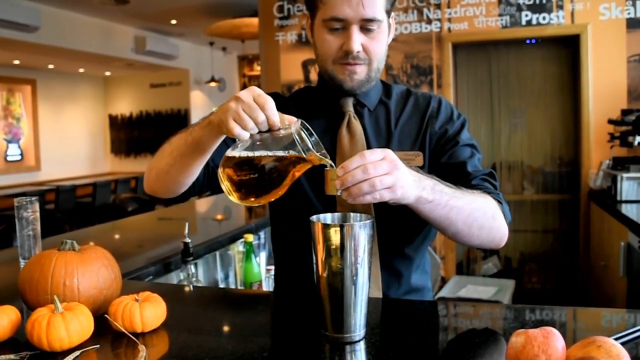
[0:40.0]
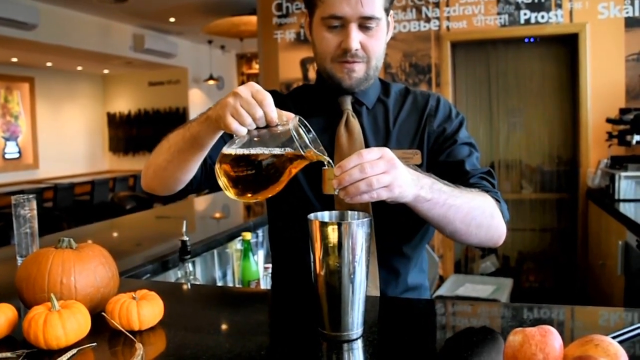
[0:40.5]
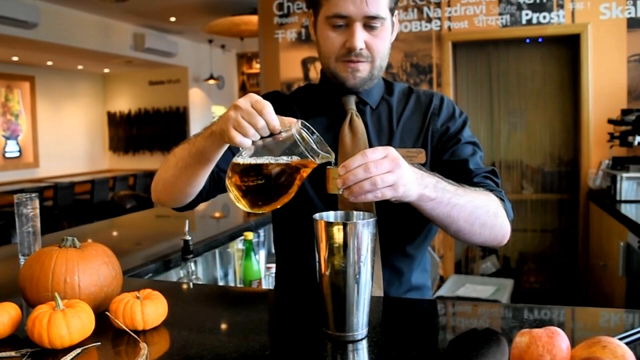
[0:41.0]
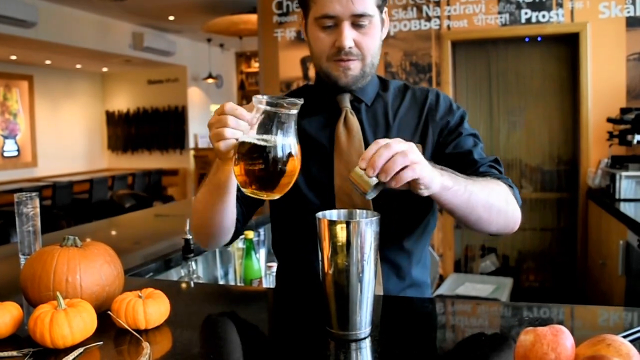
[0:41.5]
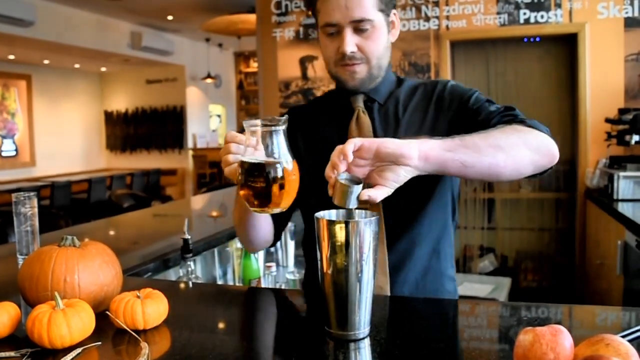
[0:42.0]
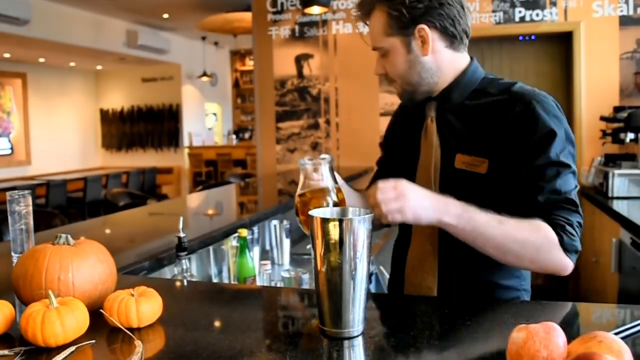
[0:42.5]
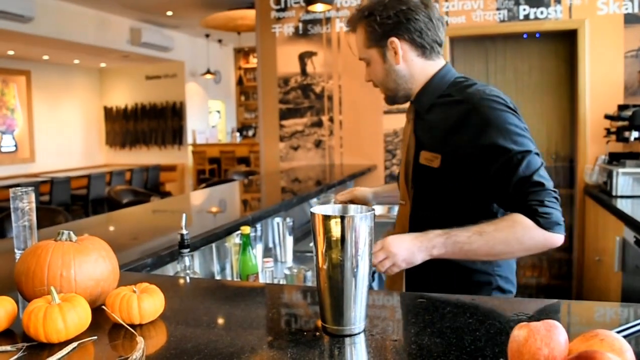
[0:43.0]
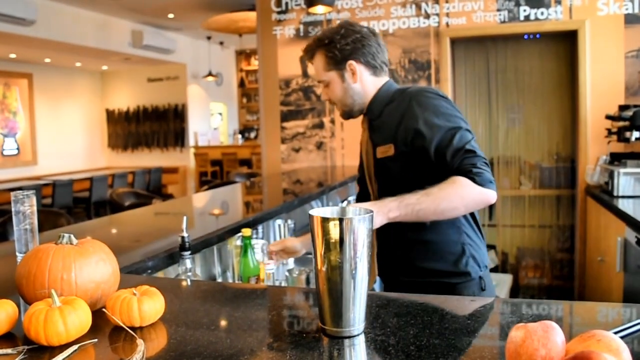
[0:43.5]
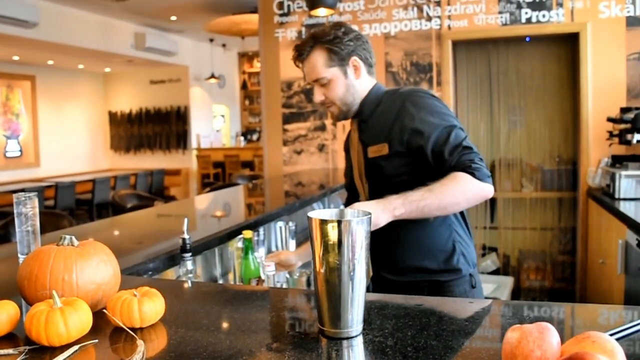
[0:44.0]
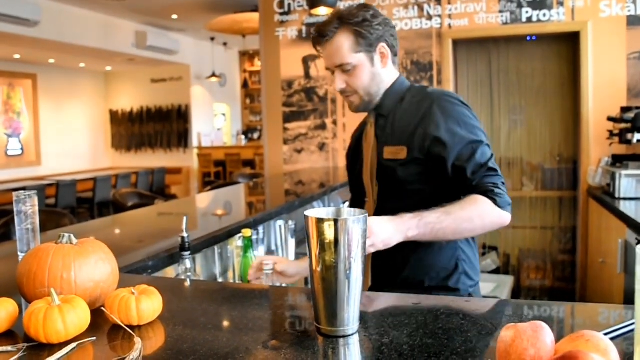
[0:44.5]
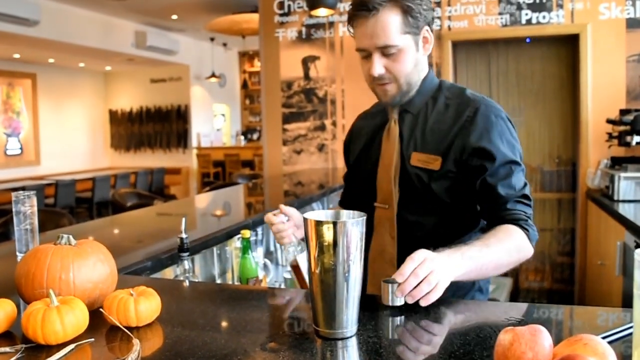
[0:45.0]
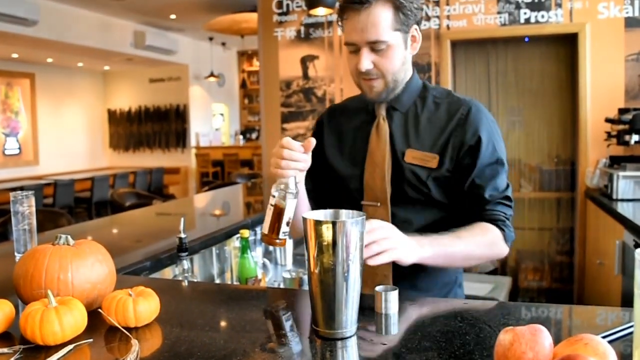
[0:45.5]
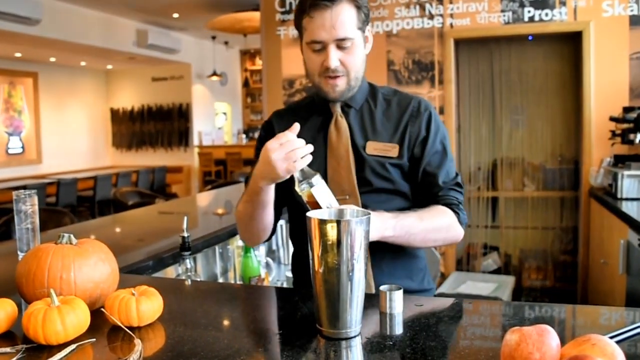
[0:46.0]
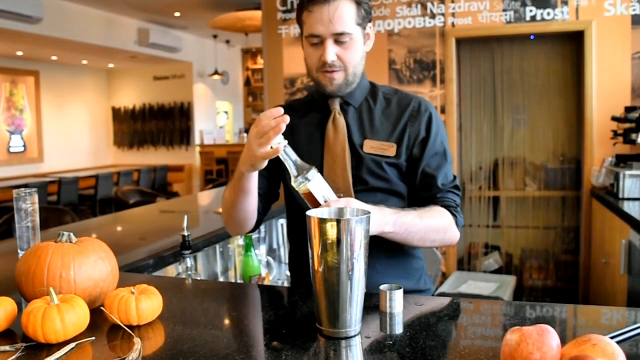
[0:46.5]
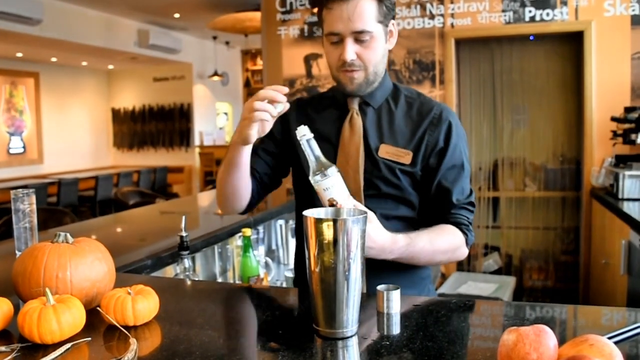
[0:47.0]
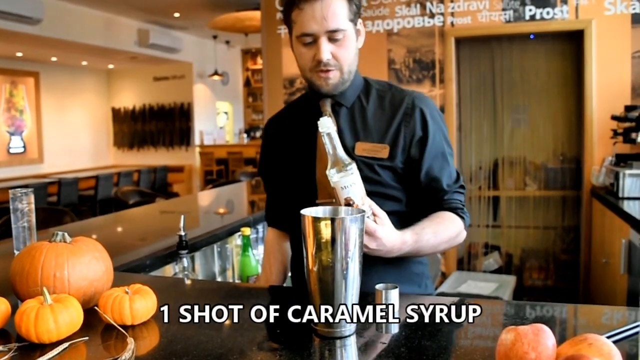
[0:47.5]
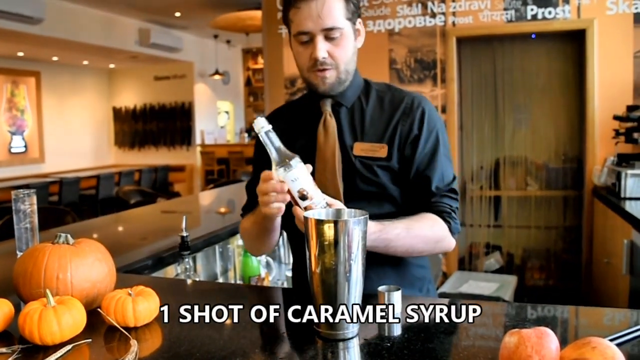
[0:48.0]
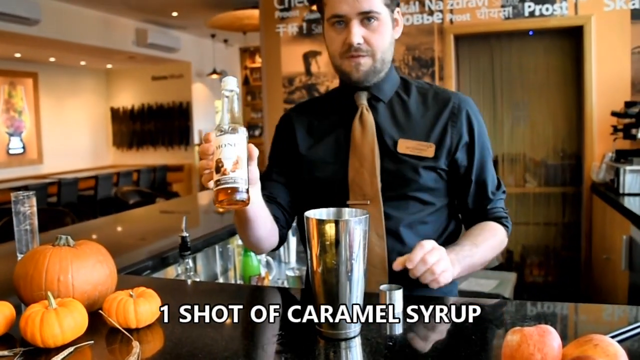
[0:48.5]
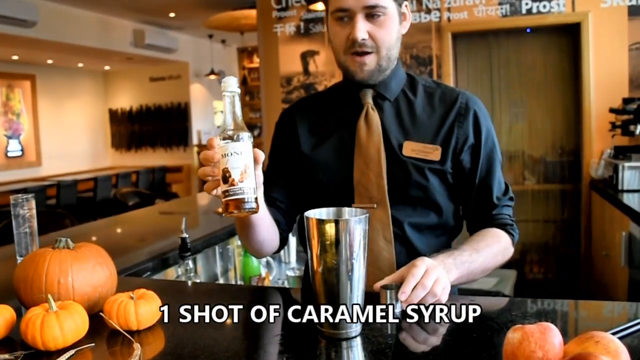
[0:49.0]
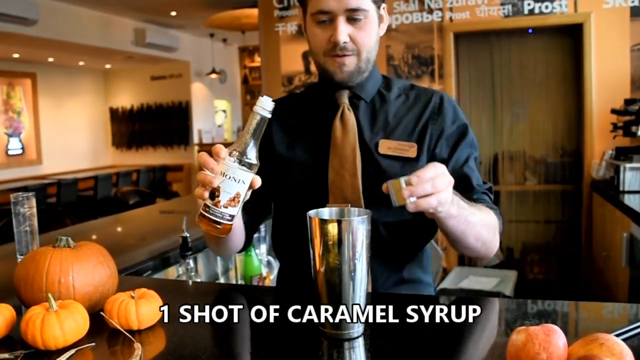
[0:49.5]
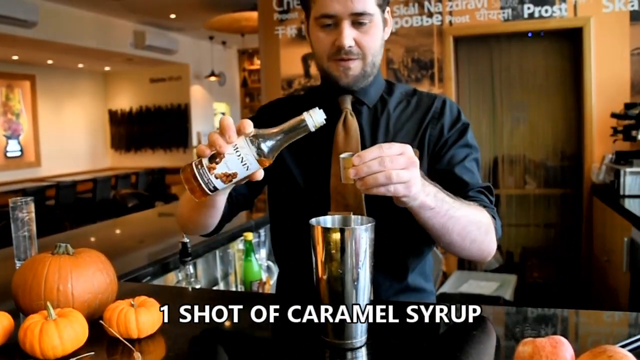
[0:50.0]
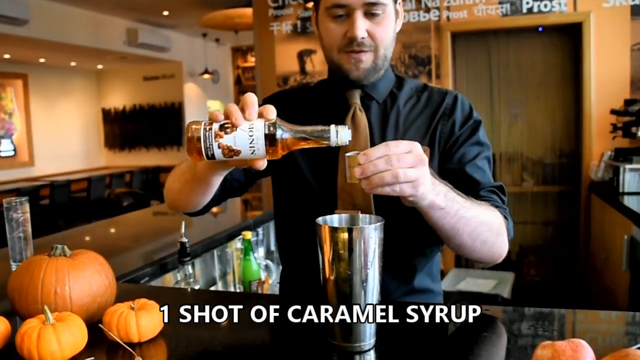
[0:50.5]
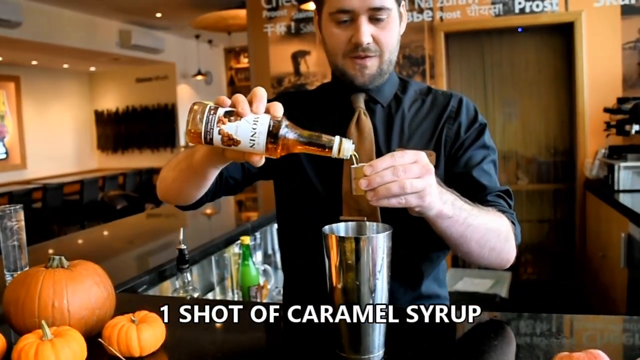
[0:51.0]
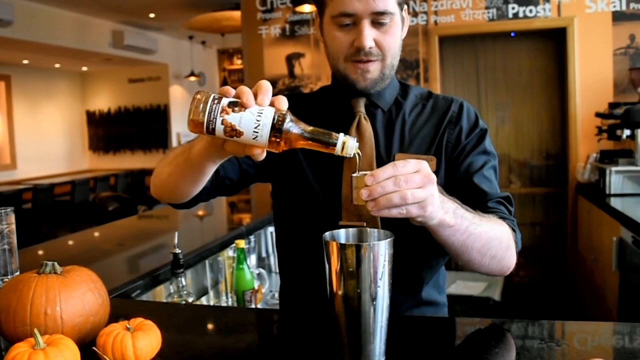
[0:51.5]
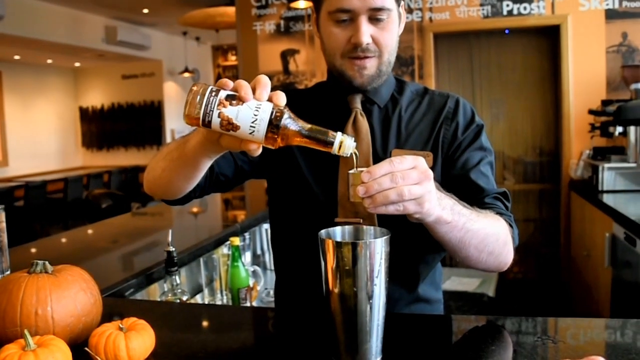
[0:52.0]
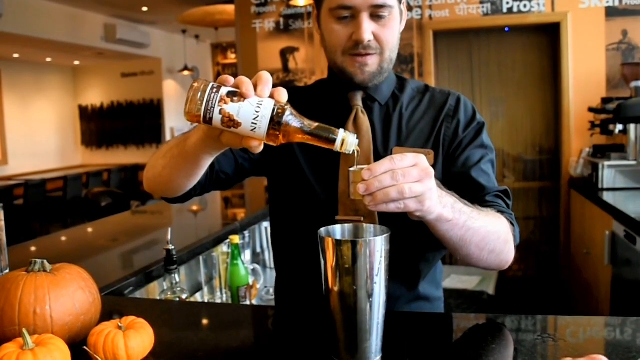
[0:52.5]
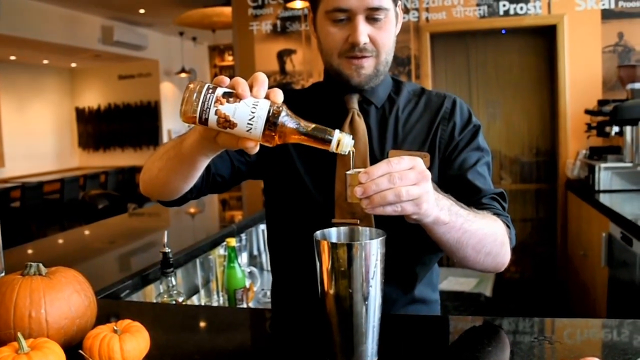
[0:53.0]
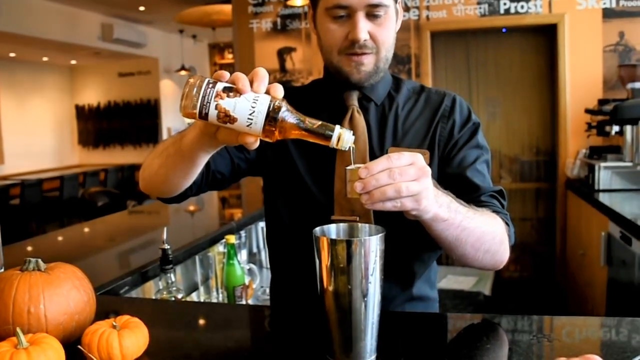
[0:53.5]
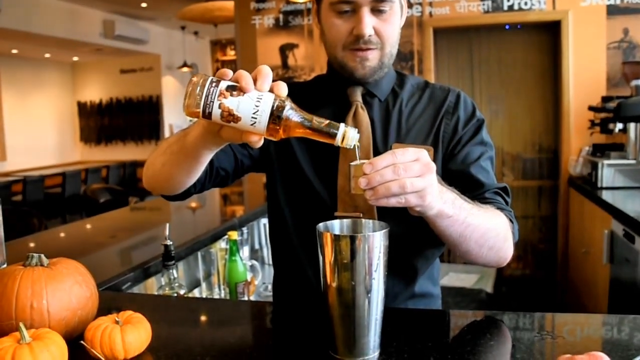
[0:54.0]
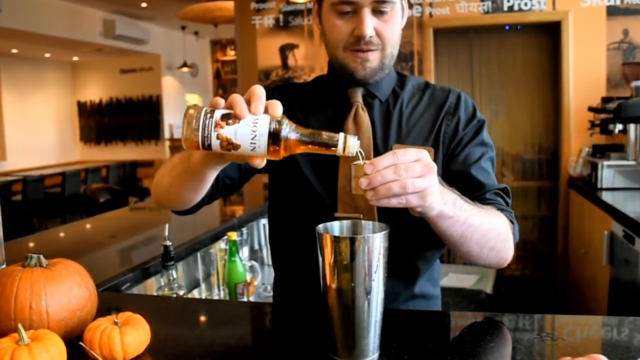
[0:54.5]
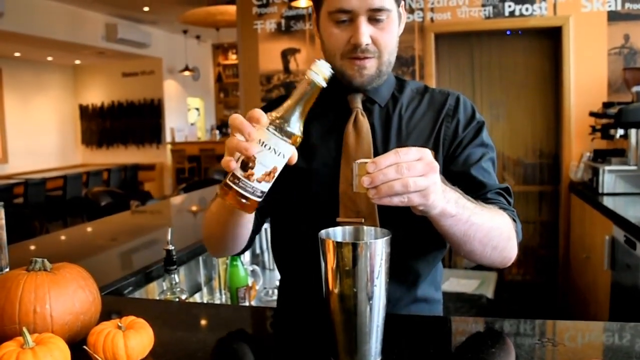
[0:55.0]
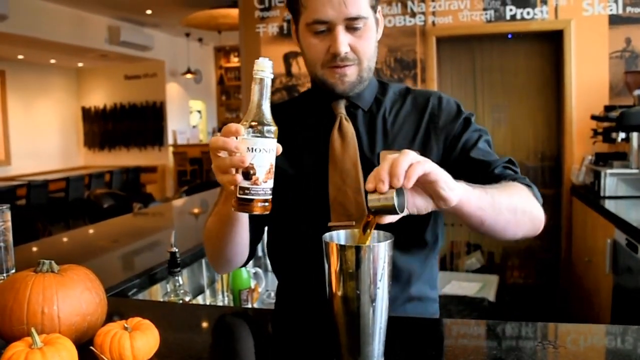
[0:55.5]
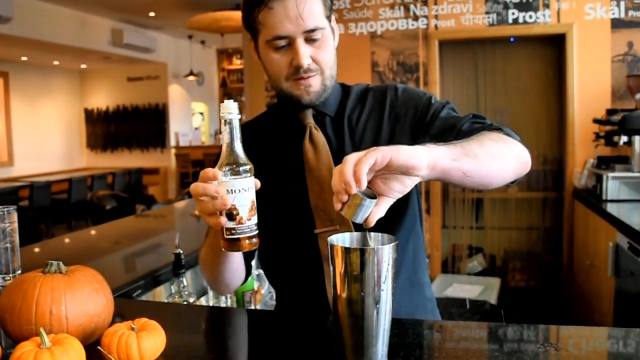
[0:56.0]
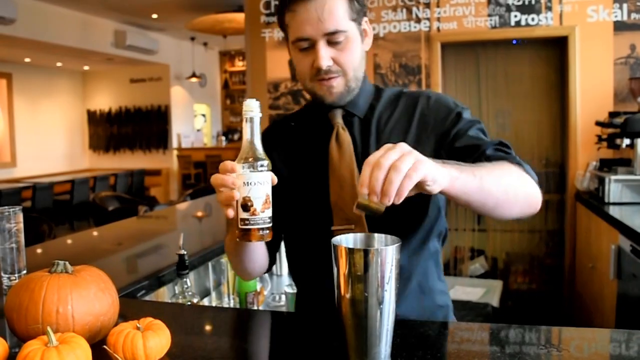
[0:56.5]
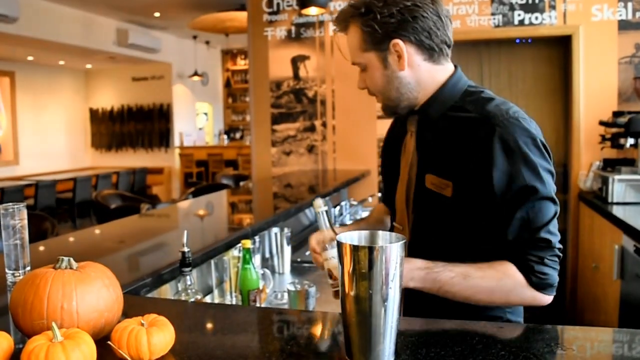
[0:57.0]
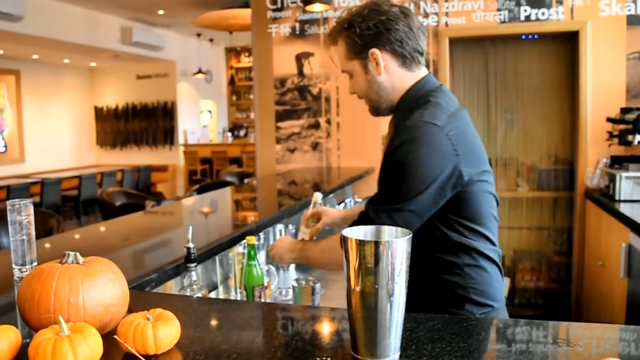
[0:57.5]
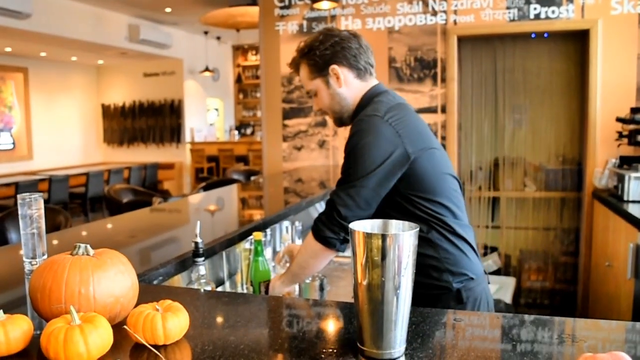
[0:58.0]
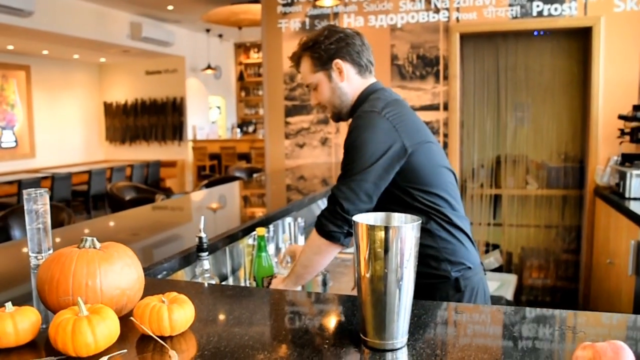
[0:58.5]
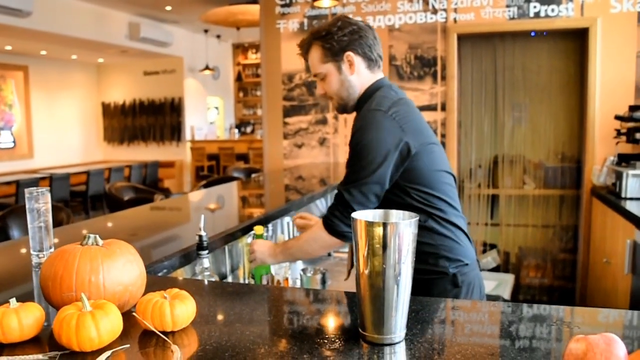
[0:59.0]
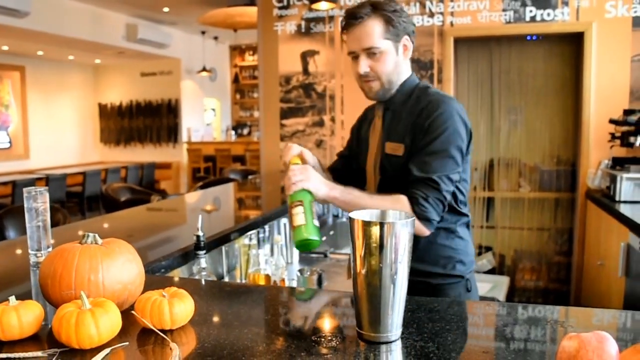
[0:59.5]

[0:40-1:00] Pumpkins are in front of the bartender: a large one and three smaller ones to his right, the viewer's left. He is a Caucasian man in his mid-30s with dark eyes, dark hair and a light mustache and beard, wearing a black shirt with rolled-up sleeves and an orange tie. He pours scotch into a measuring cup, with a large silver mixing cup underneath him. The countertop in front of him is black, and the countertop to his right is the same. He puts the scotch back and adds one shot of caramel syrup to the scotch.